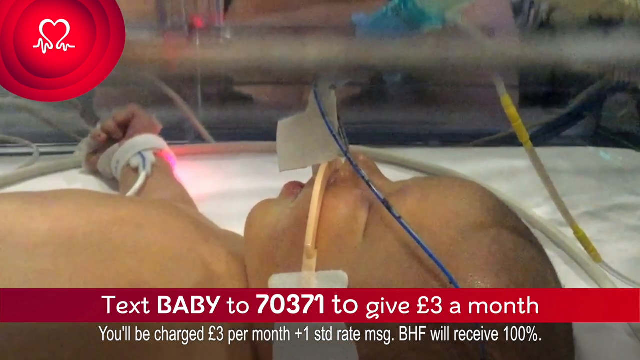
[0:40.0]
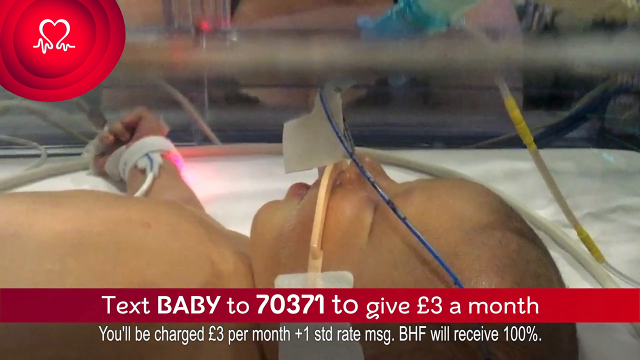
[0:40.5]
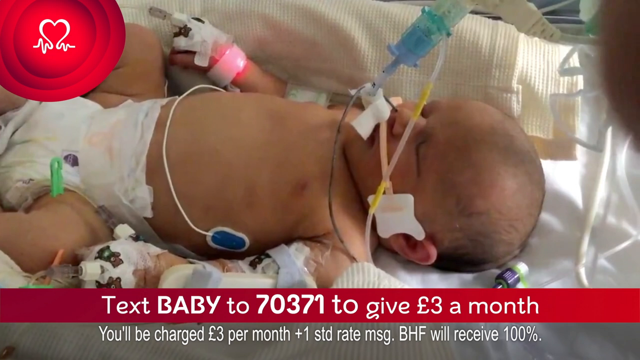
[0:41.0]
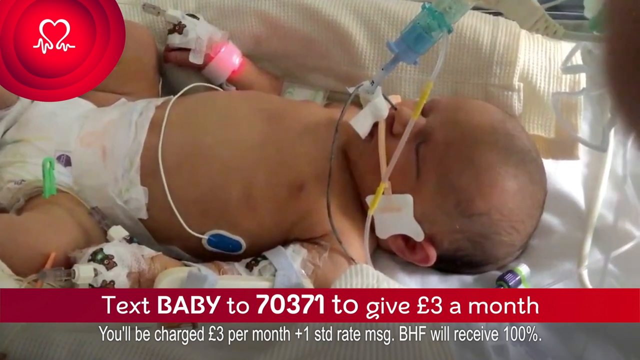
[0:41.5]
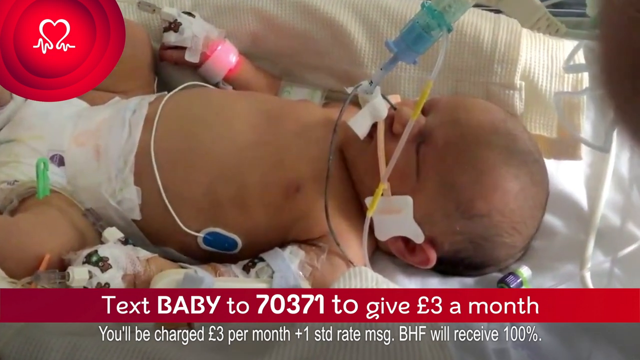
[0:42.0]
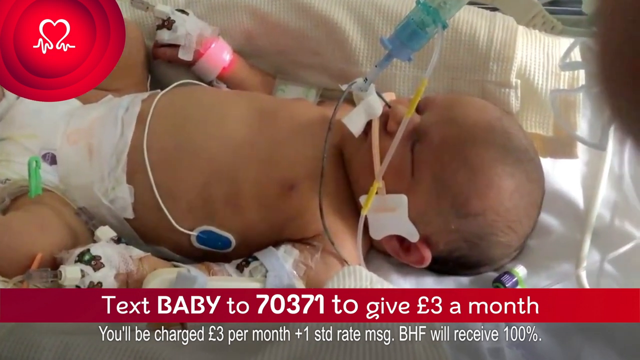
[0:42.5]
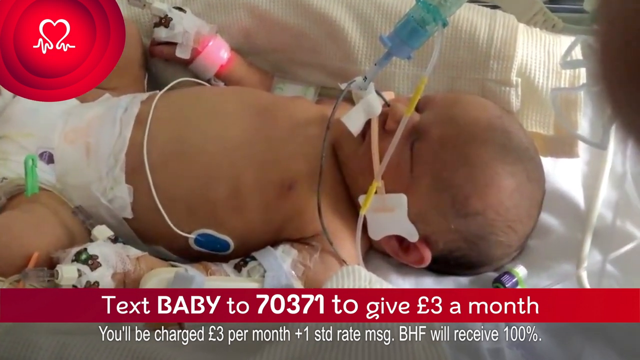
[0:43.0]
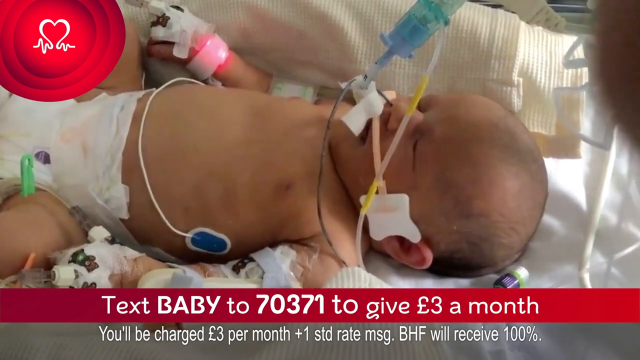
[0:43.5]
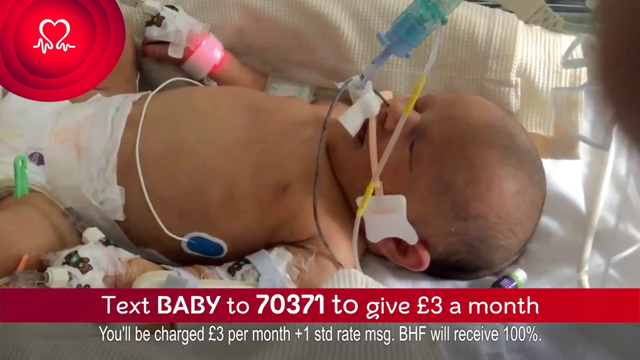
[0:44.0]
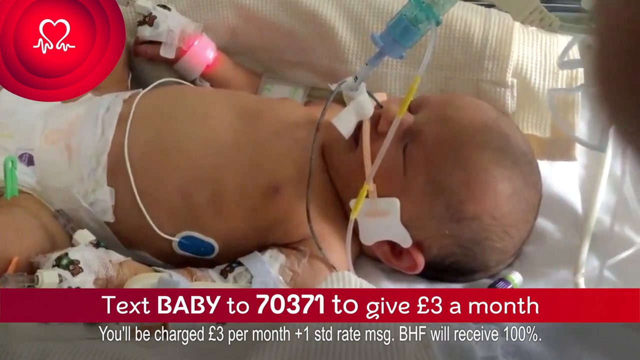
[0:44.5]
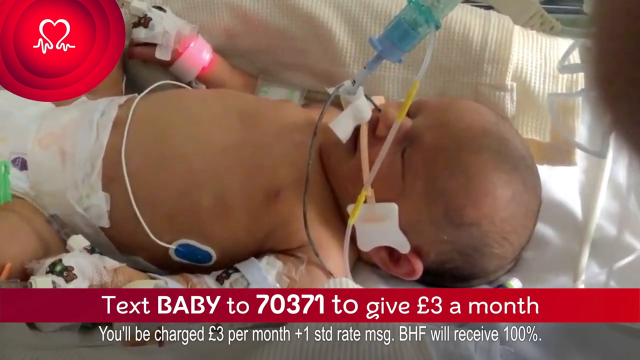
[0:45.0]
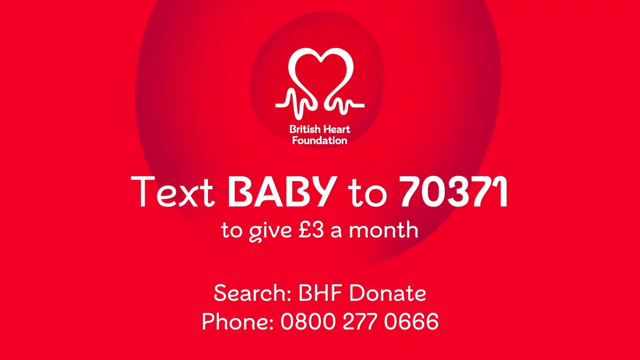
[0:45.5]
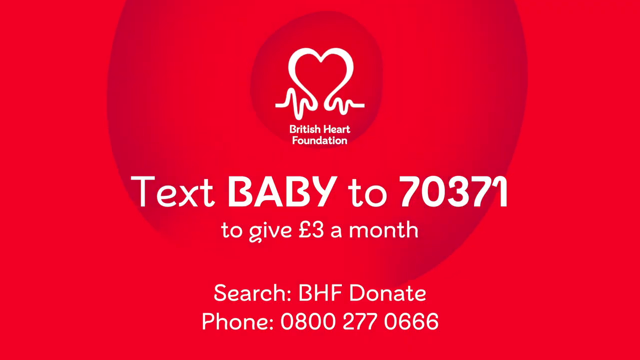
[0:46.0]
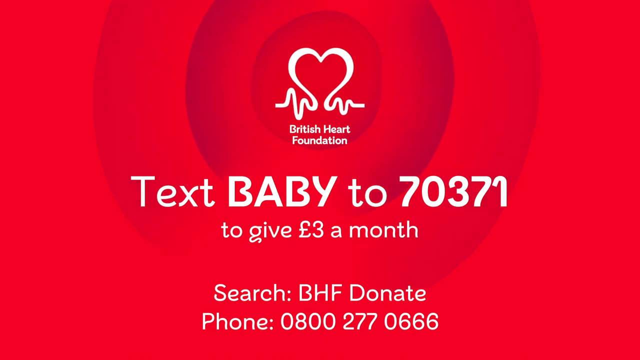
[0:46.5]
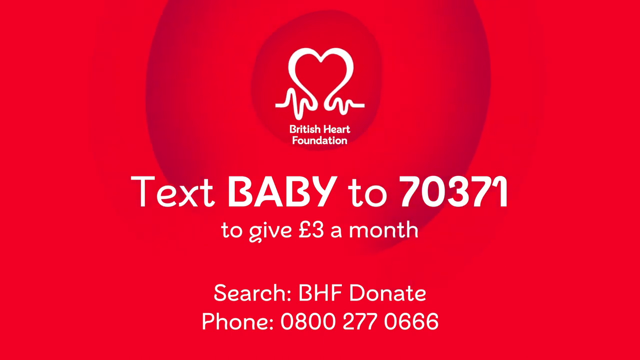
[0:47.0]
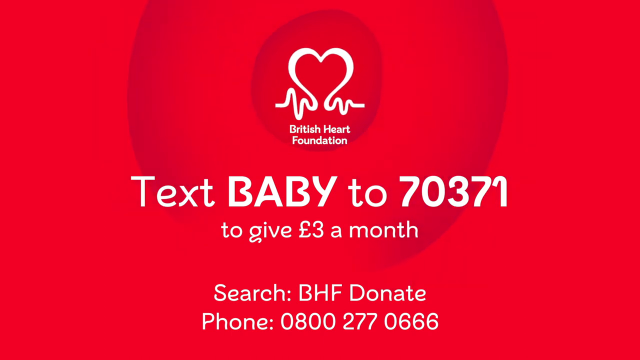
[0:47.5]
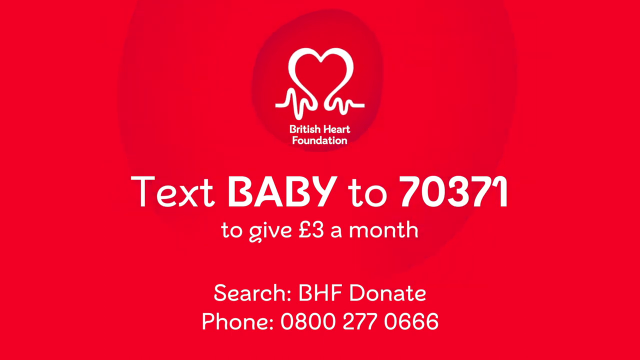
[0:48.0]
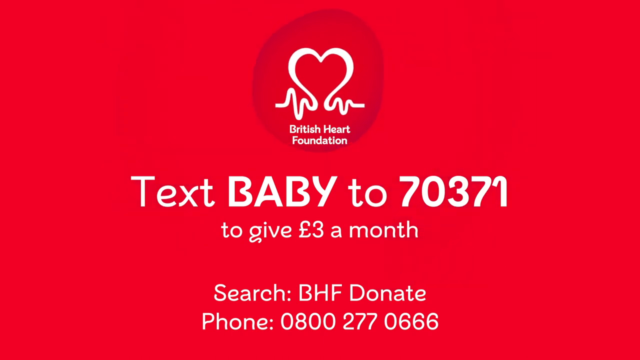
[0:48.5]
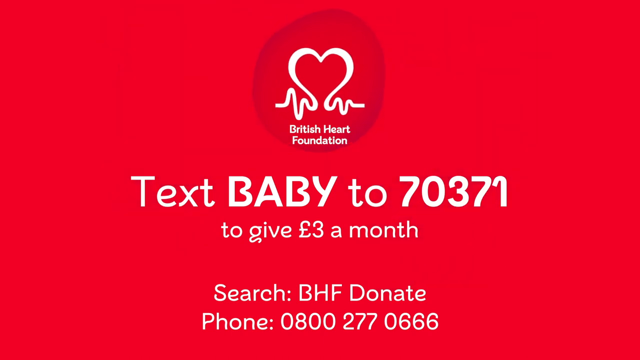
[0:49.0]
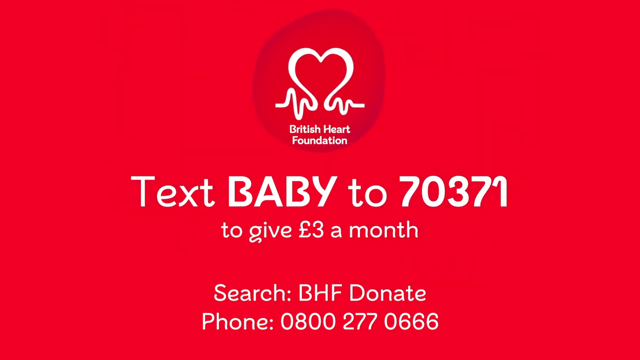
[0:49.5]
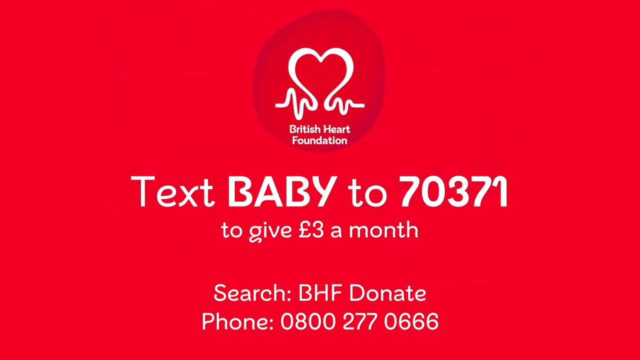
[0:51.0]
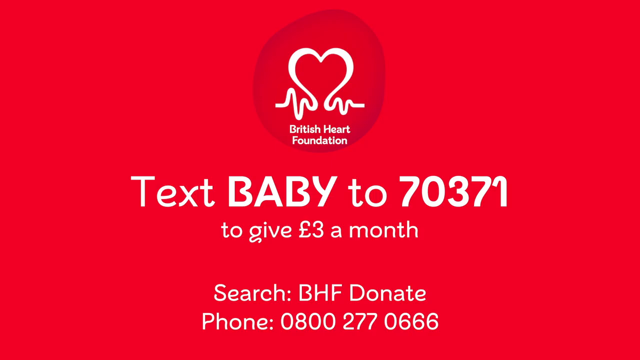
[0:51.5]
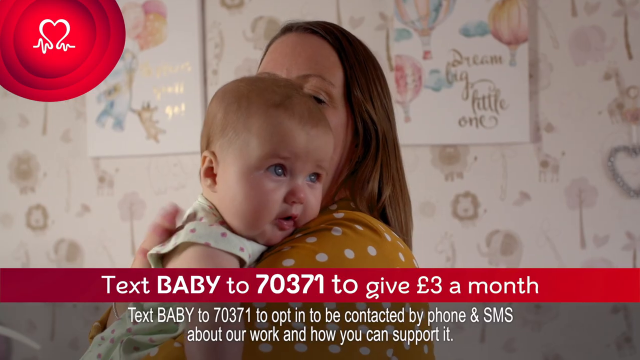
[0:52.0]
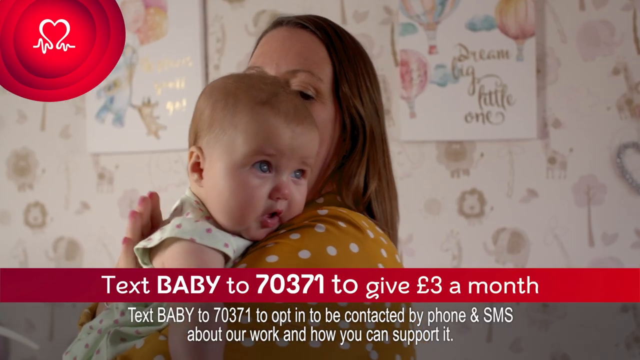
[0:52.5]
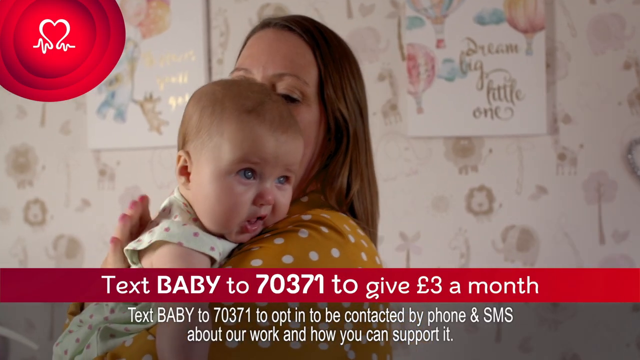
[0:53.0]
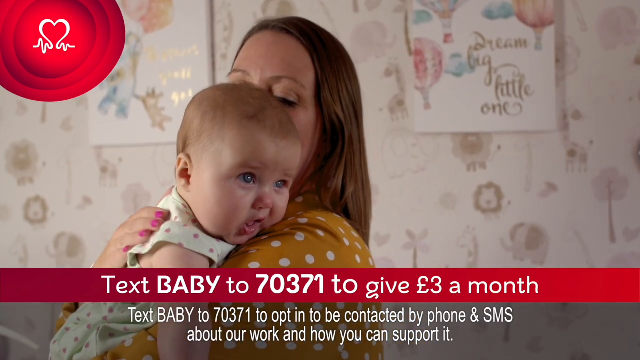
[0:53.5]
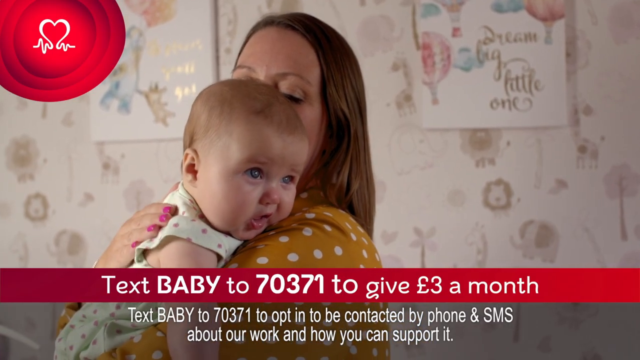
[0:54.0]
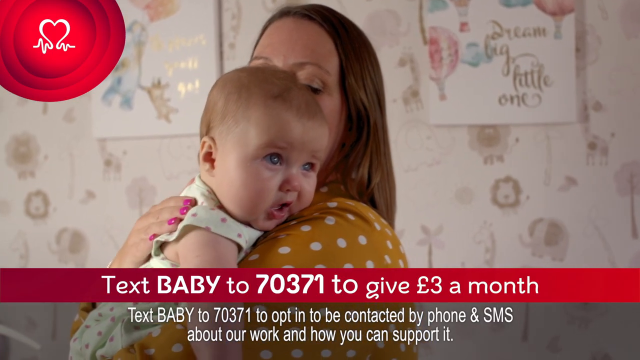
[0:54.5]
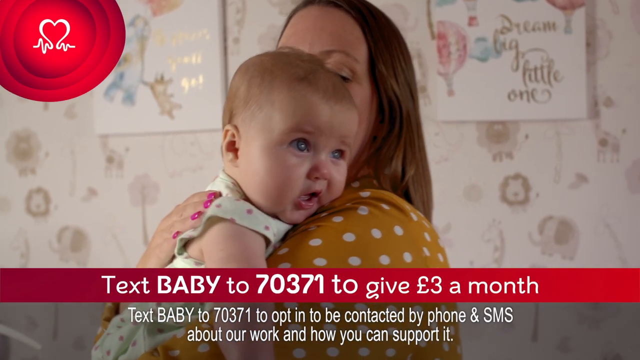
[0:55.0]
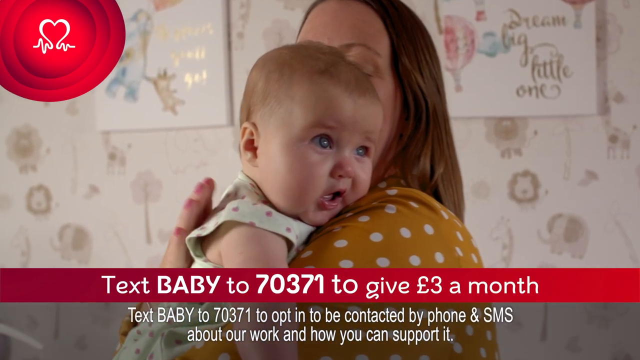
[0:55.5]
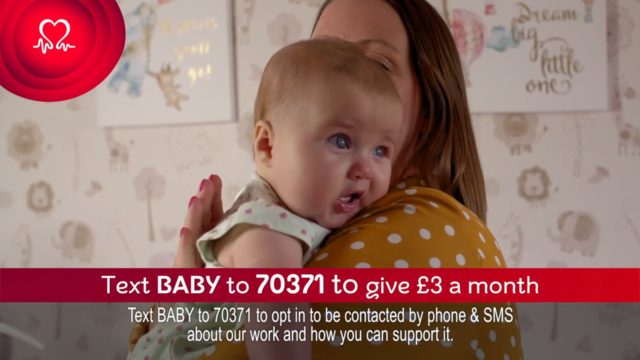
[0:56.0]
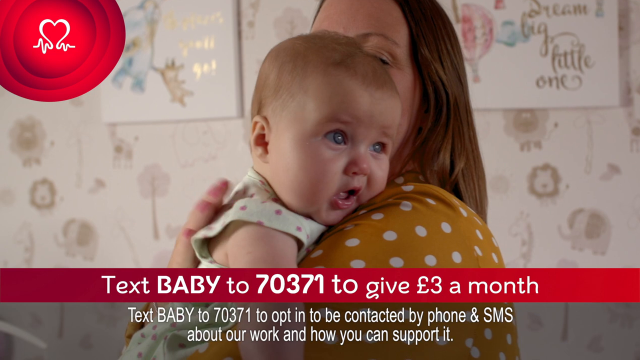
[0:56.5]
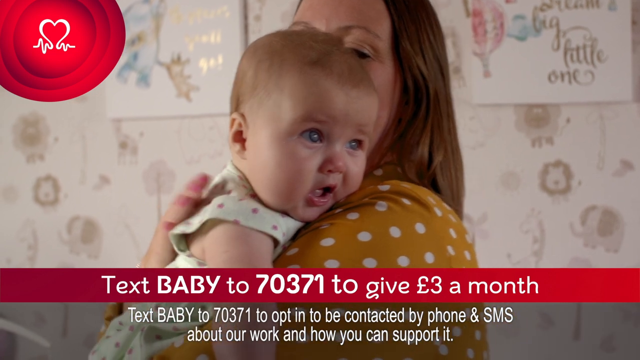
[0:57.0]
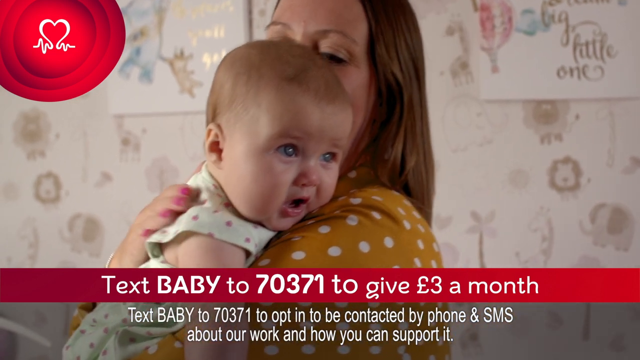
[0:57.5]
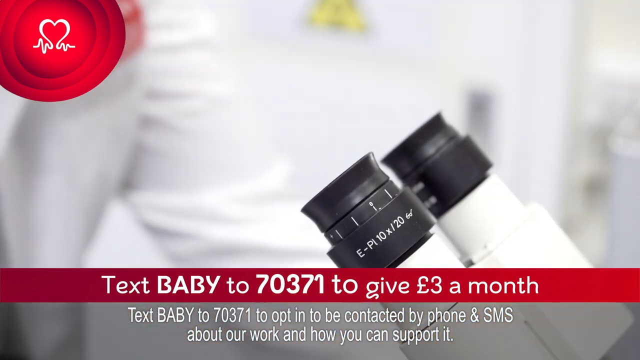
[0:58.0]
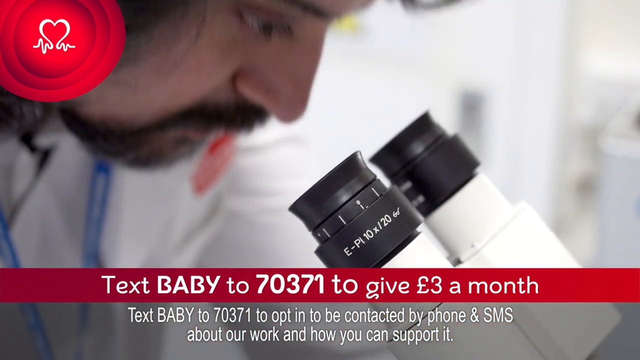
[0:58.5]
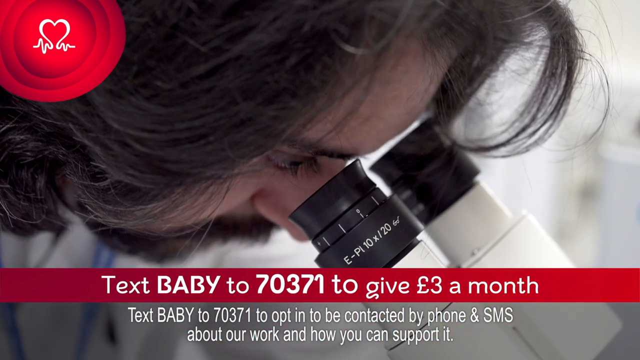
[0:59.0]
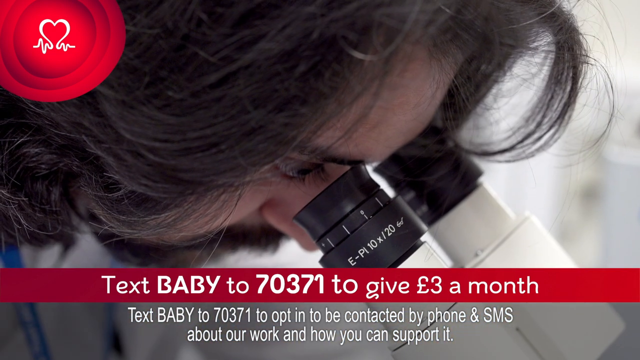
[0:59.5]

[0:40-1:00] In the middle of this section, a red British Heart Foundation screen shows the logo at the top and, in the center, the text "Text BABY to 70371 to give £3 a month." Below this it reads "Search: BHF Donate, Phone: 0800 277 0666." The rest of the footage shows images of babies in the hospital in intensive care and babies being held by their mothers. Throughout, a red text bar at the bottom of the screen reads "Text BABY to 70371 to give £3 a month," with changing text below it. At one point this reads "You'll be charged £3 per month +1 STD rate msg. BHF will receive 100%." Later it changes to "Text BABY to 70371 to opt in to be contacted by phone and SMS about our work and how you can support it."